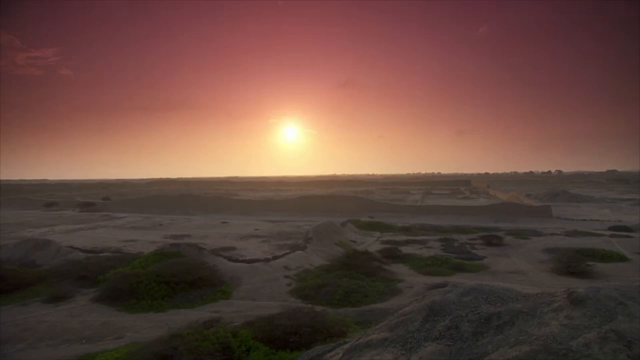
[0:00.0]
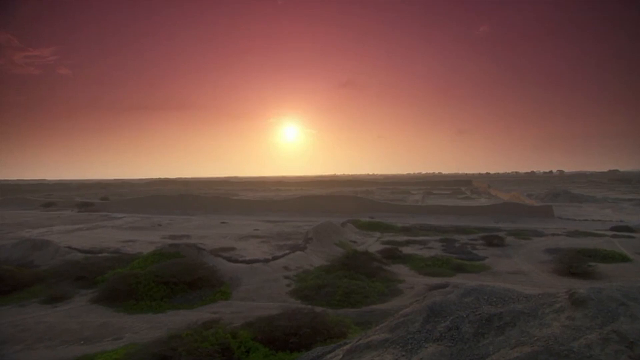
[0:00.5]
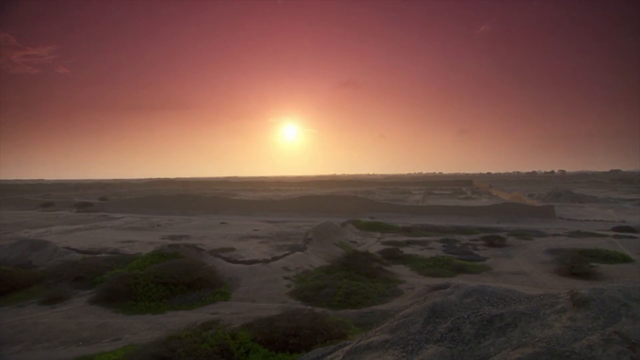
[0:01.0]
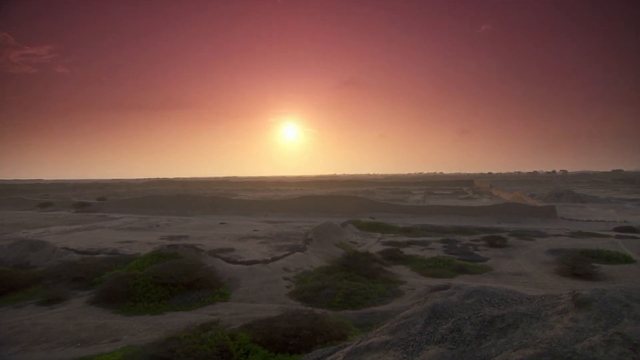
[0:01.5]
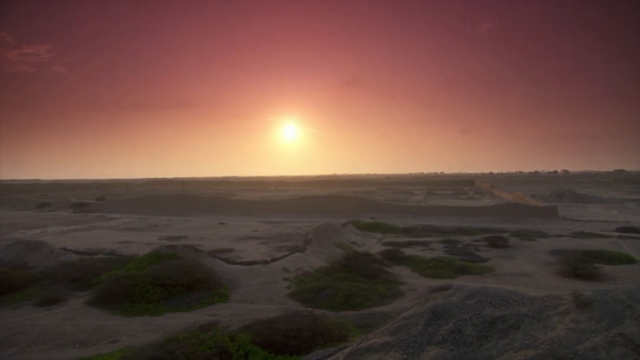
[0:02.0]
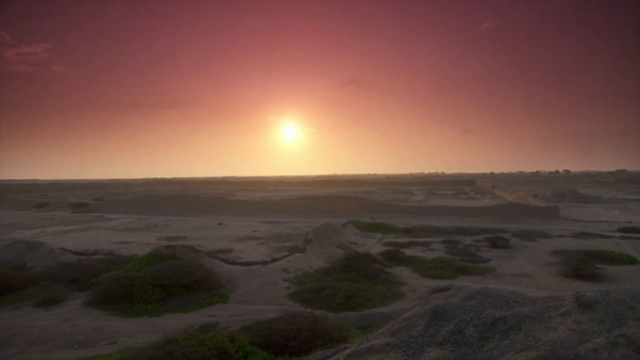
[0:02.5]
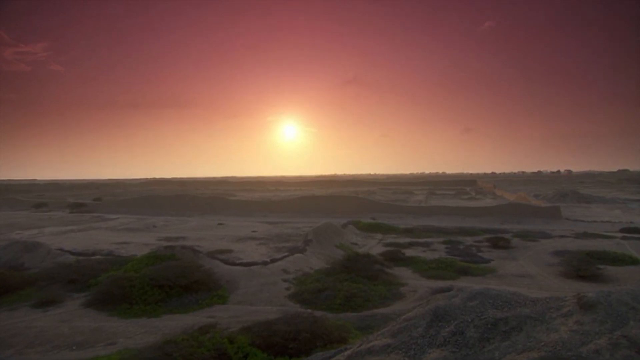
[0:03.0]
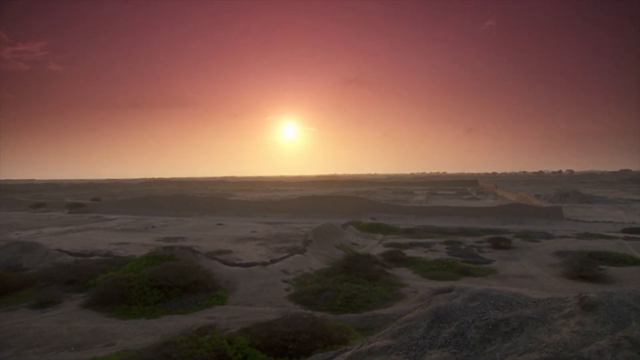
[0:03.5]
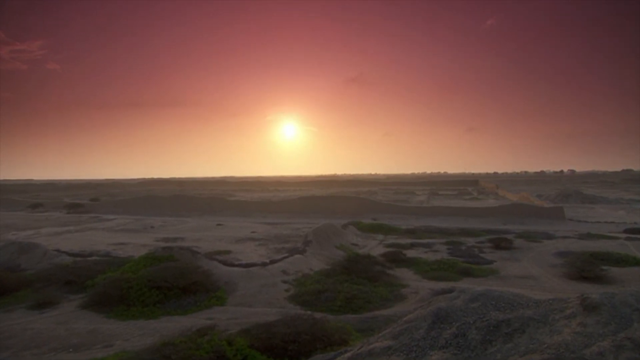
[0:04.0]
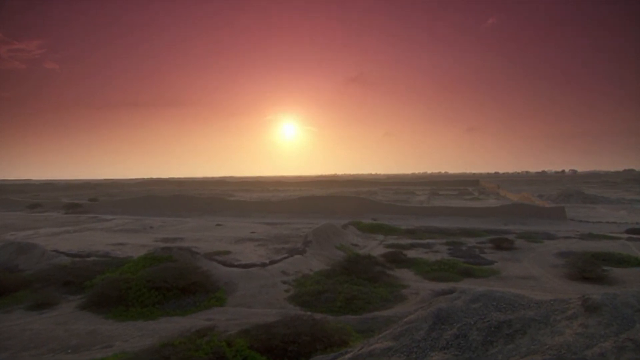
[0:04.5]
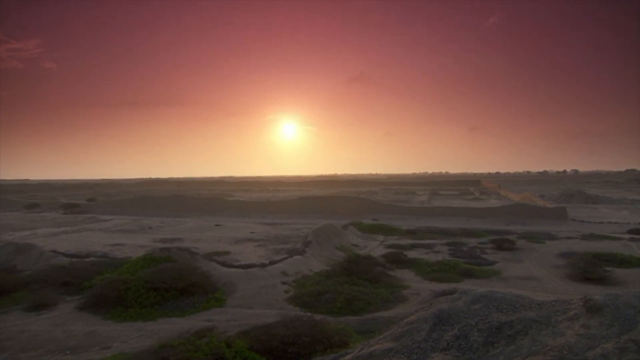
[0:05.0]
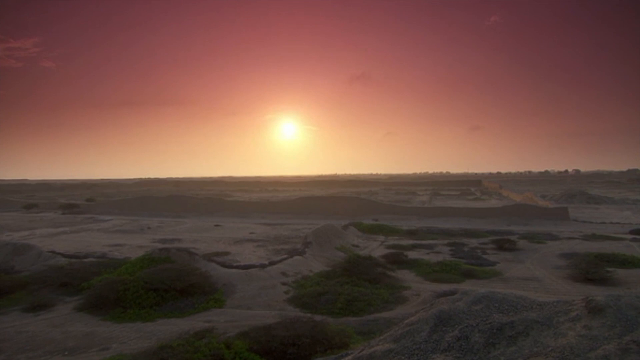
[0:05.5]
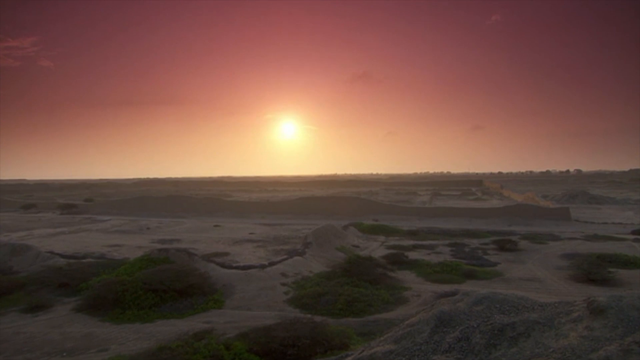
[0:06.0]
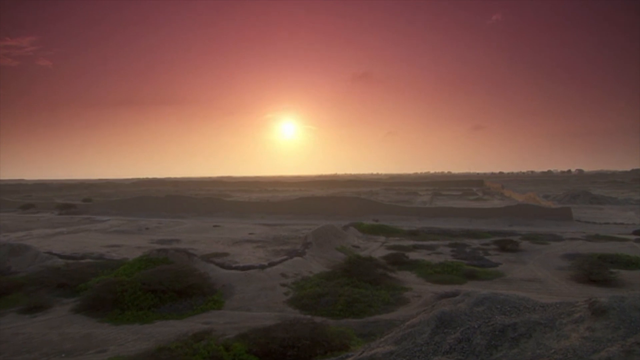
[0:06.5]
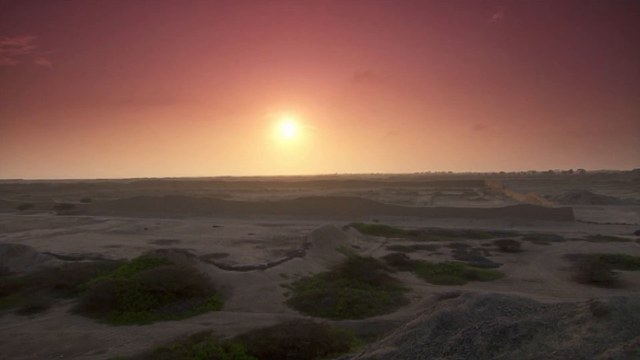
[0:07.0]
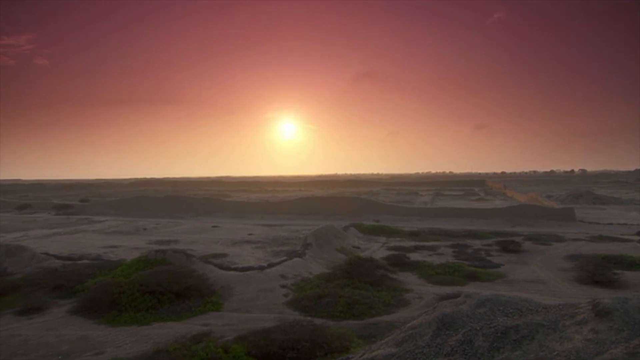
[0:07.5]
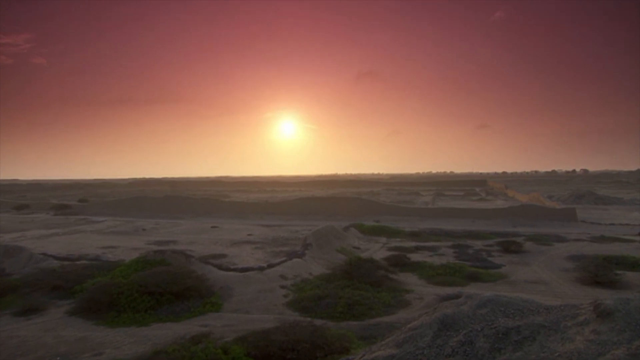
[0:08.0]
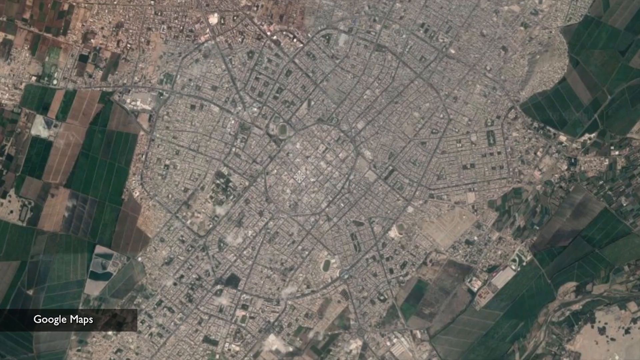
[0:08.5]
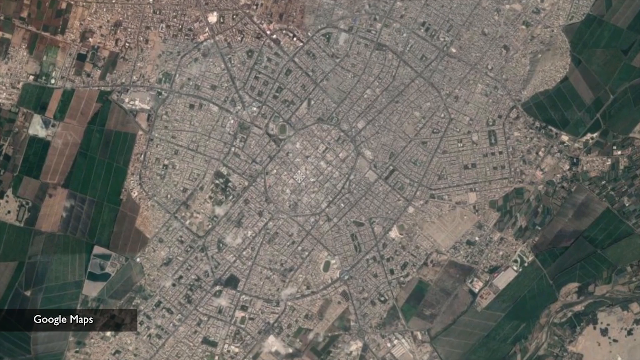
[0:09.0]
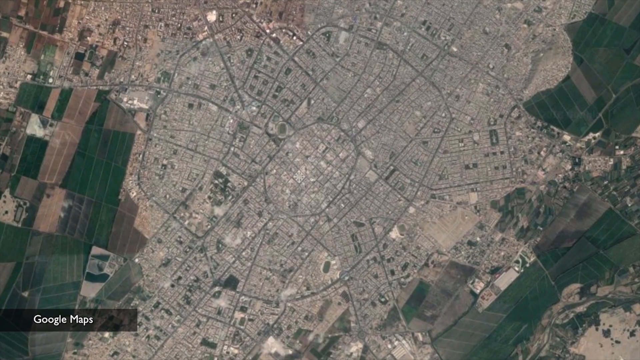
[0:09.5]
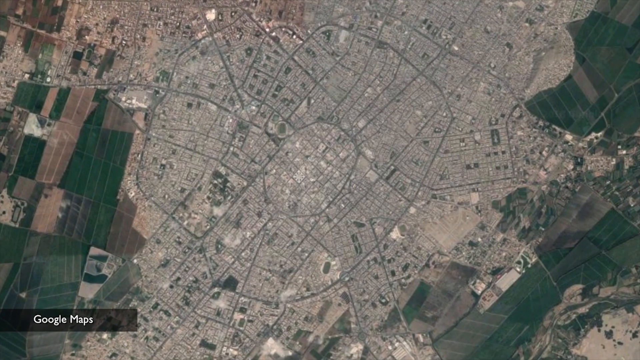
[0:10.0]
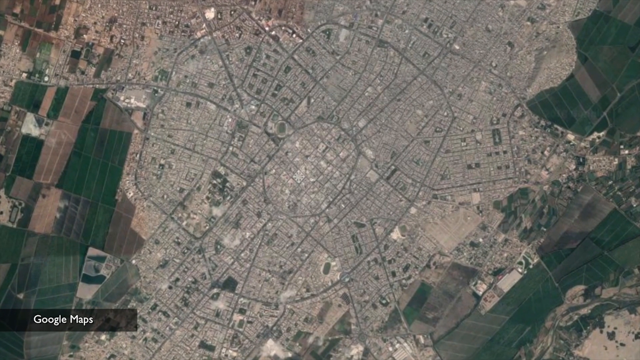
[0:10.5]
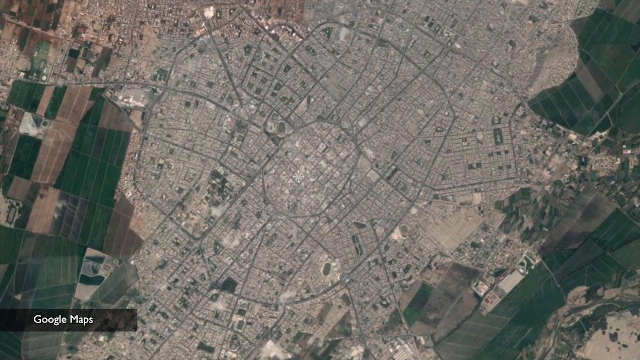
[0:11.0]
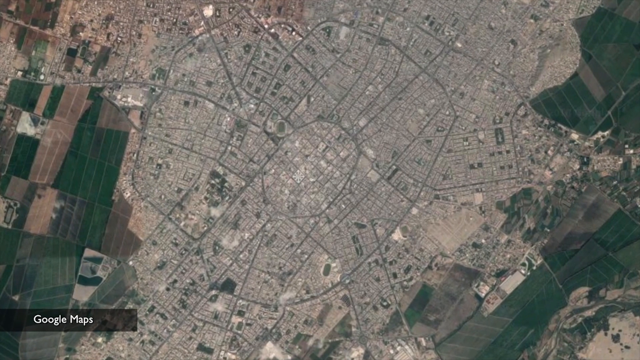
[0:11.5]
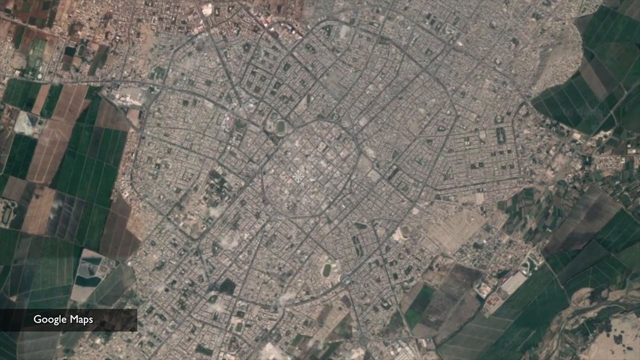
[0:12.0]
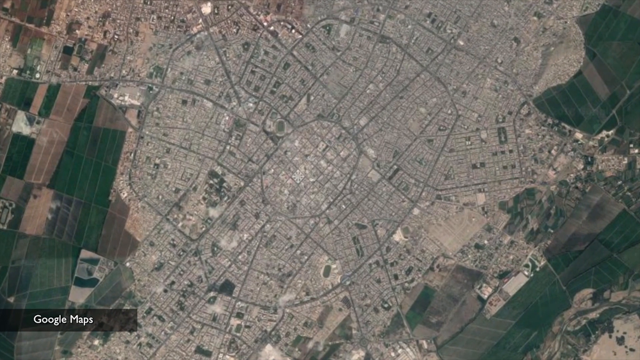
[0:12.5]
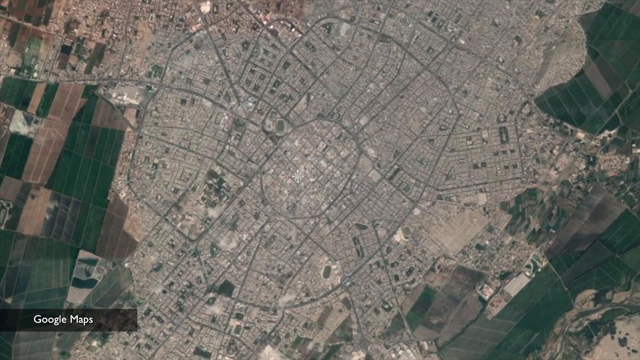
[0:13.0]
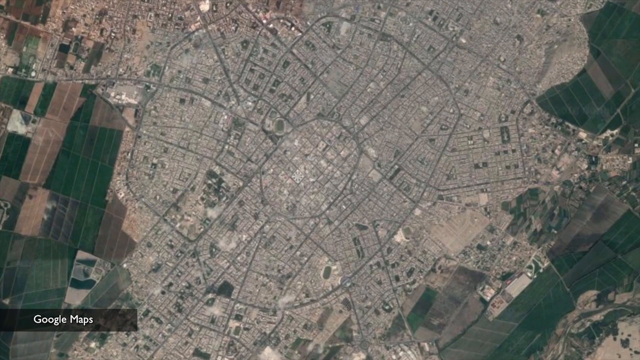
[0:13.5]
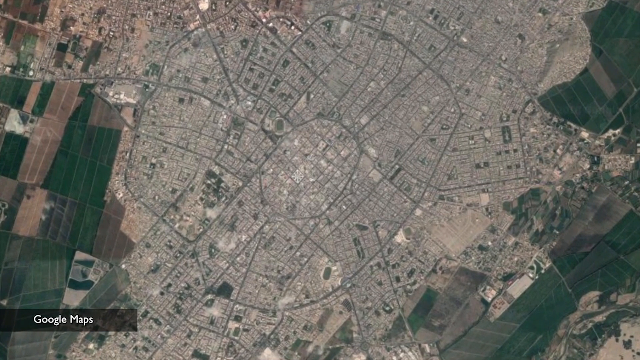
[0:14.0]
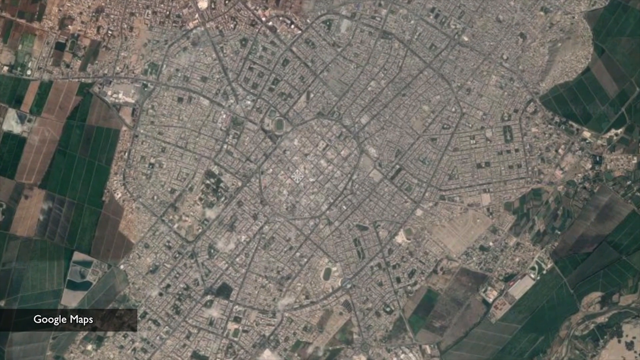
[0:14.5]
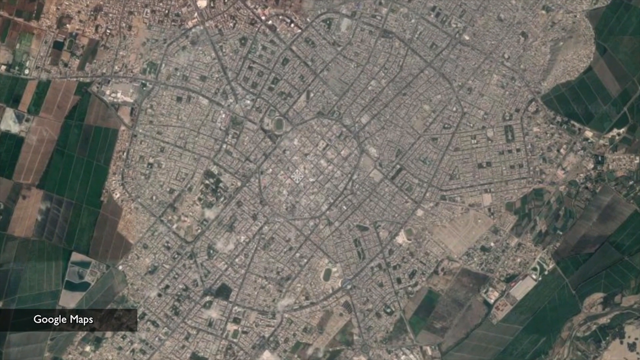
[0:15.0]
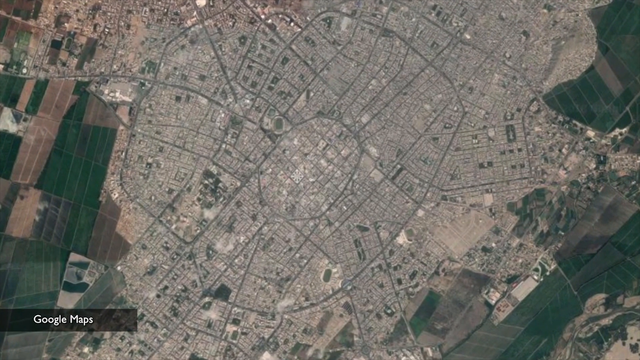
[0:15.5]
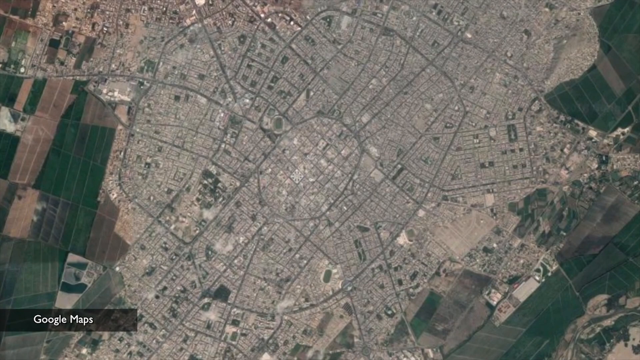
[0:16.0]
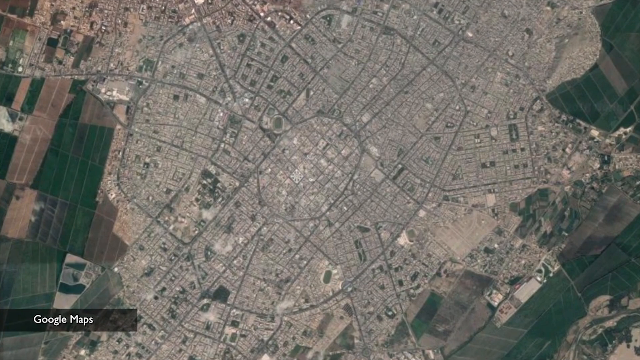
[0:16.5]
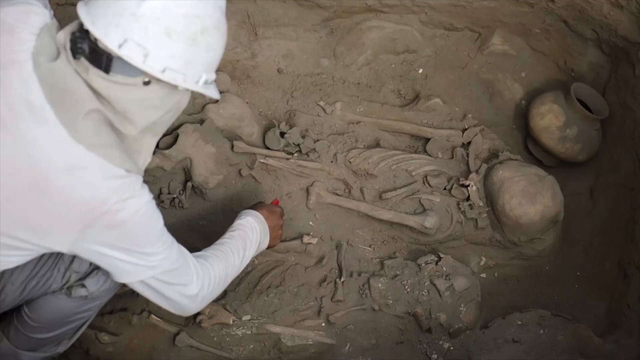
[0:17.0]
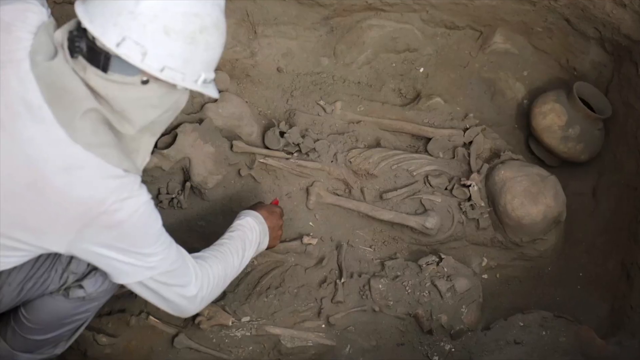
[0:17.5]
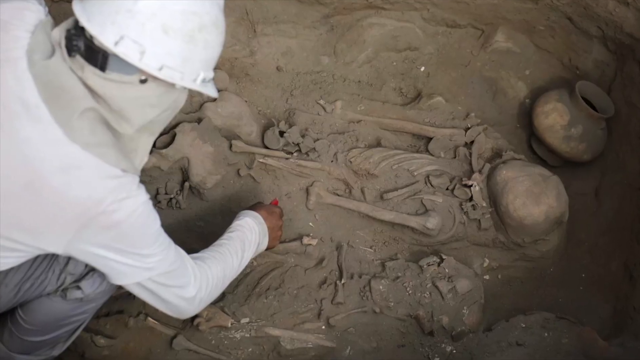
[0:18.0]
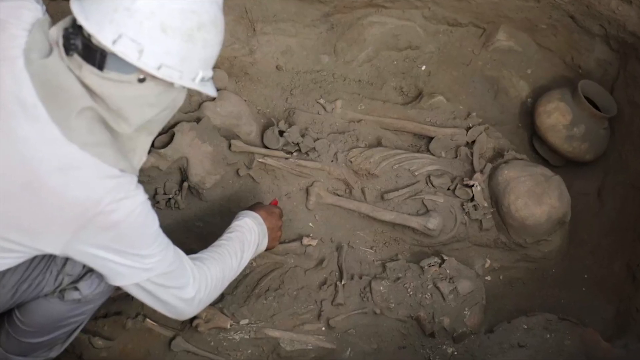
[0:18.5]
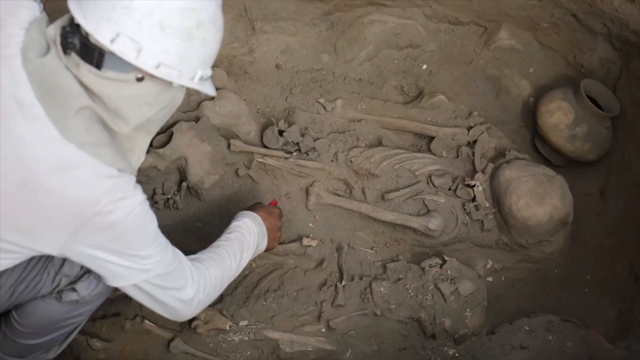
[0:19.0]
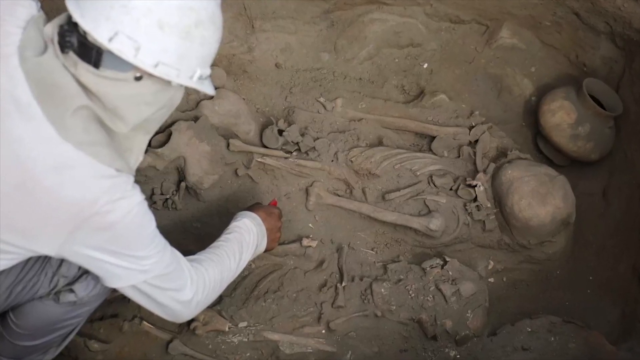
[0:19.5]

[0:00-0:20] The video opens on what looks like a view of the desert, which takes up about half of the screen, from the middle to the bottom. The sun and a hazy sky are visible, and it appears to be either sunset or sunrise, as the sky has a reddish dark tone. Next comes a satellite view of a city, with "Google Maps" in the bottom left; the roads and little square-shaped buildings are visible. Then a picture shows a man in a white hard hat and a white long-sleeve shirt who appears to be in the process of excavating a skeleton. The skeleton is still very much in the ground, the man is bent down, and there is a pot next to the skeleton's head on the upper right.